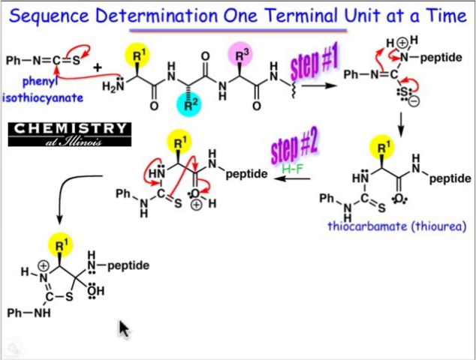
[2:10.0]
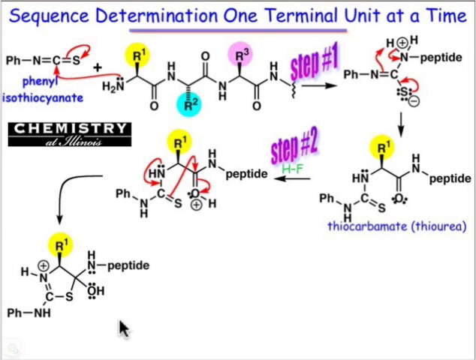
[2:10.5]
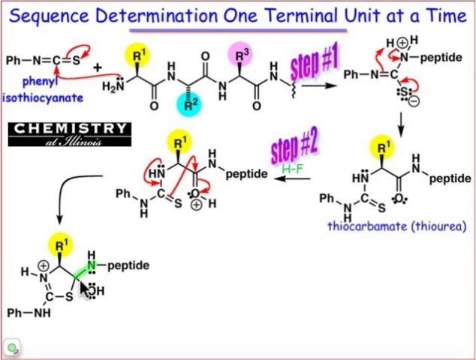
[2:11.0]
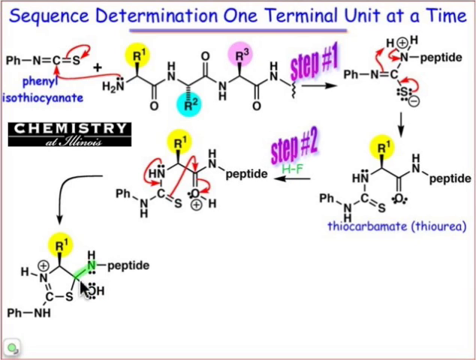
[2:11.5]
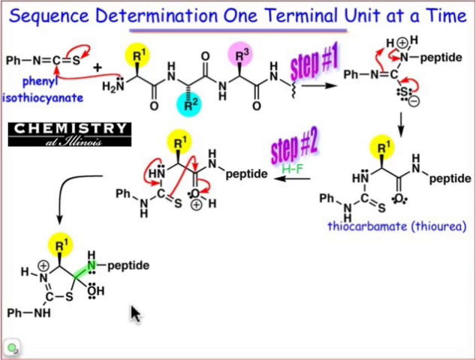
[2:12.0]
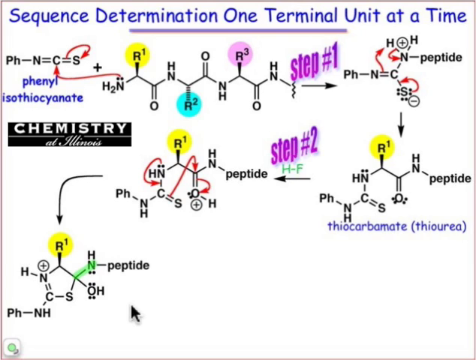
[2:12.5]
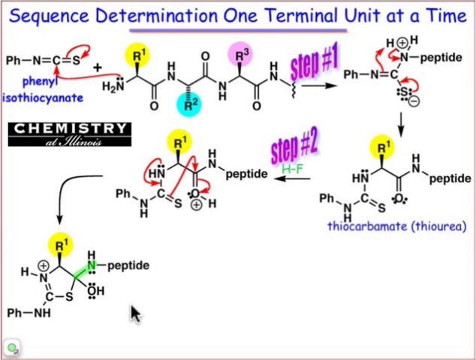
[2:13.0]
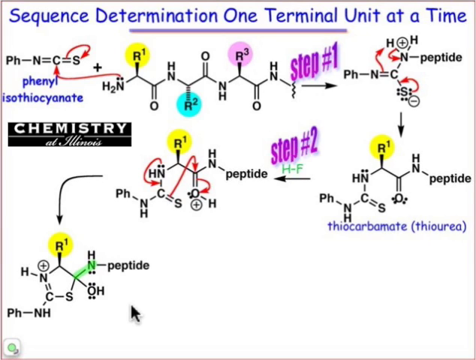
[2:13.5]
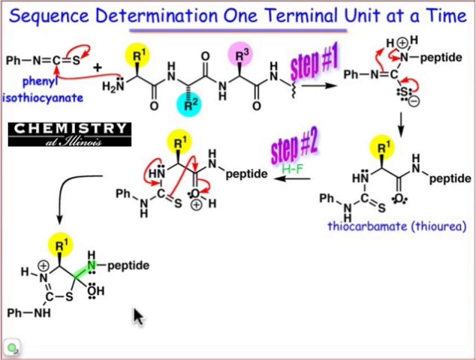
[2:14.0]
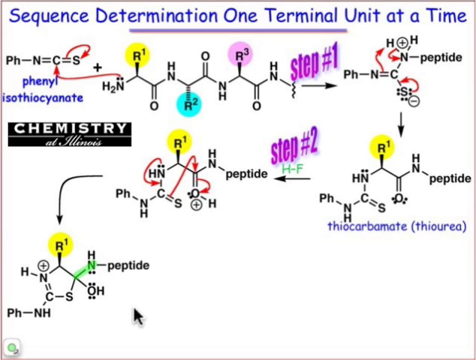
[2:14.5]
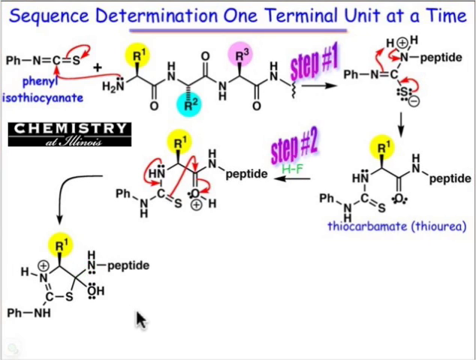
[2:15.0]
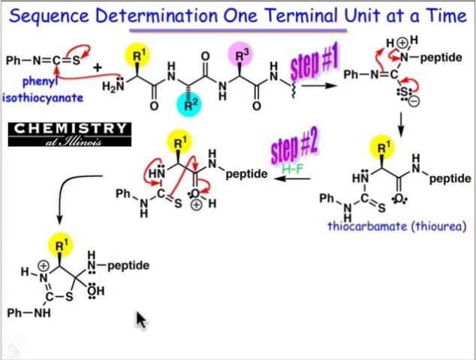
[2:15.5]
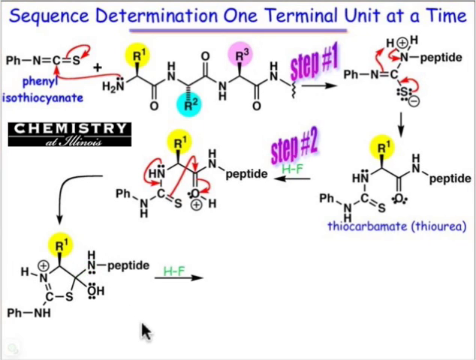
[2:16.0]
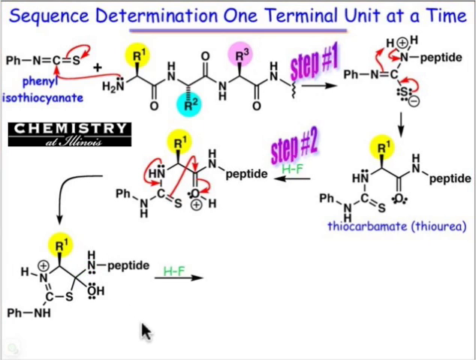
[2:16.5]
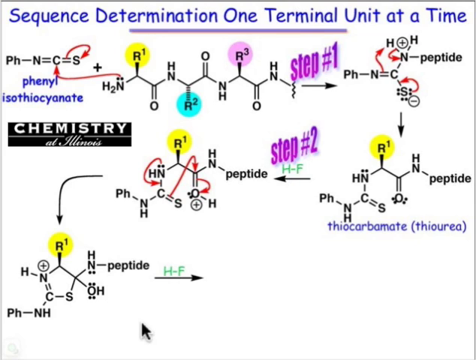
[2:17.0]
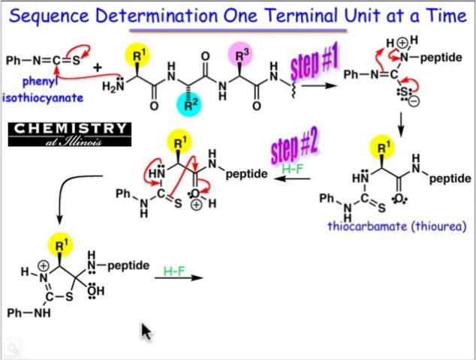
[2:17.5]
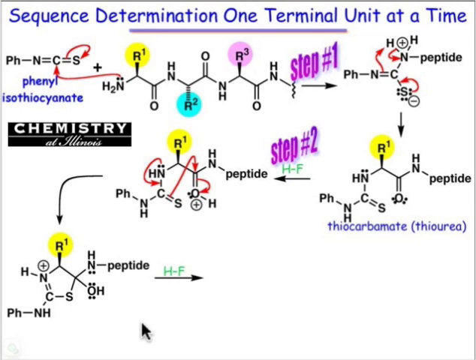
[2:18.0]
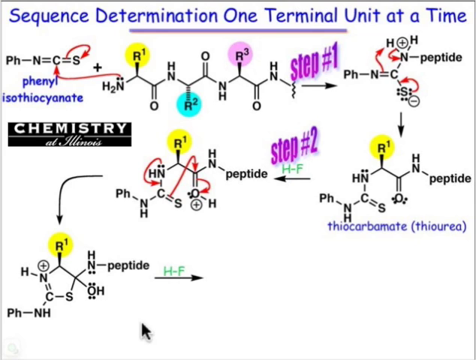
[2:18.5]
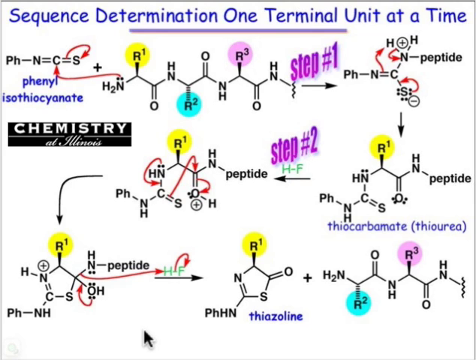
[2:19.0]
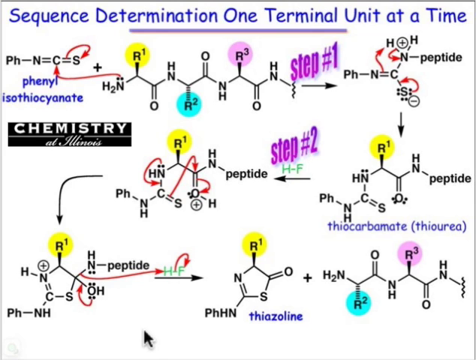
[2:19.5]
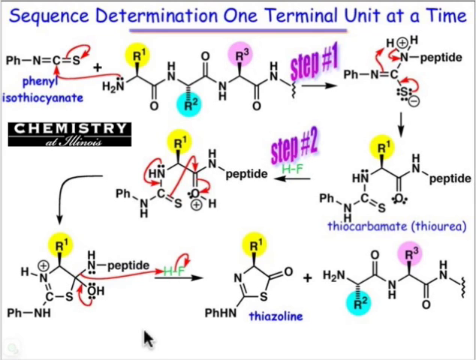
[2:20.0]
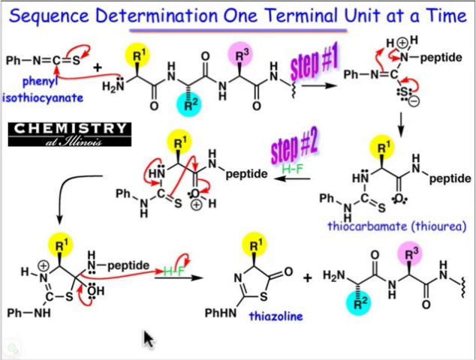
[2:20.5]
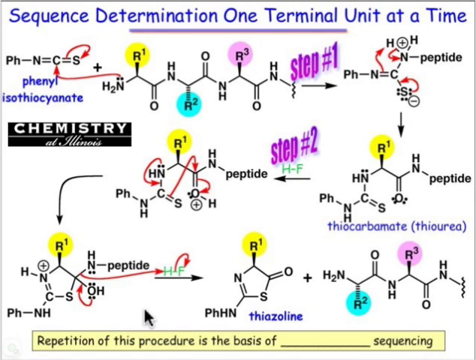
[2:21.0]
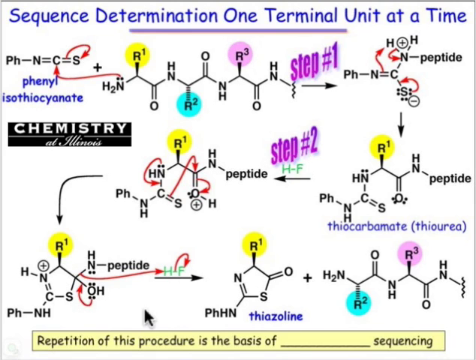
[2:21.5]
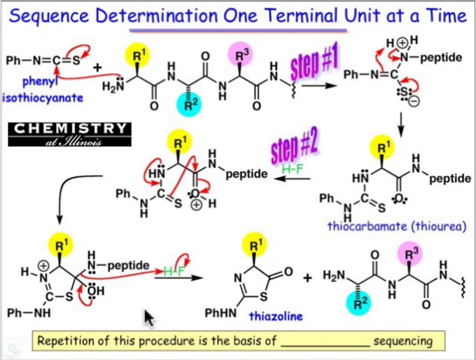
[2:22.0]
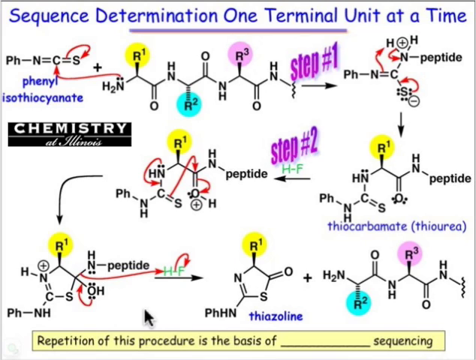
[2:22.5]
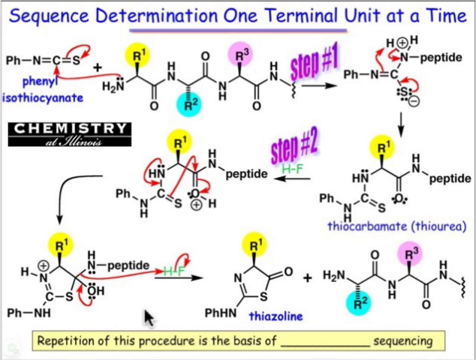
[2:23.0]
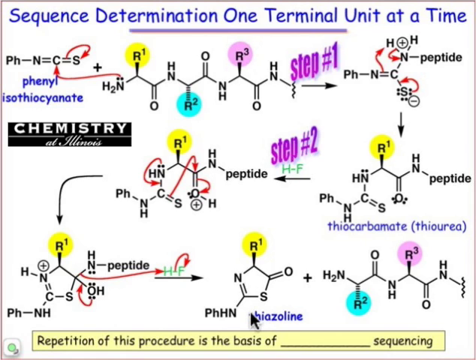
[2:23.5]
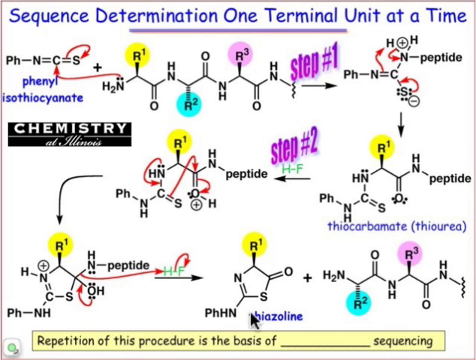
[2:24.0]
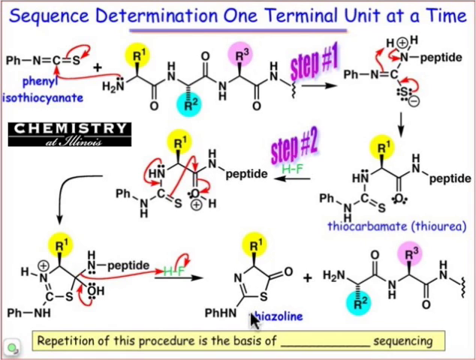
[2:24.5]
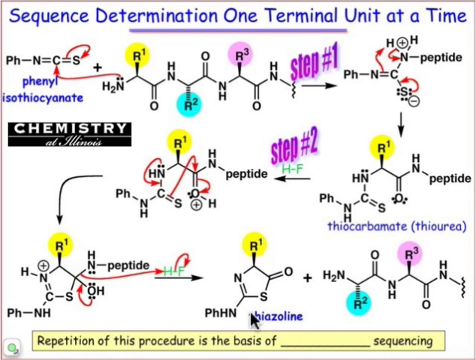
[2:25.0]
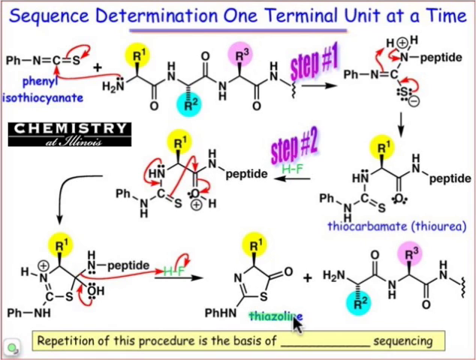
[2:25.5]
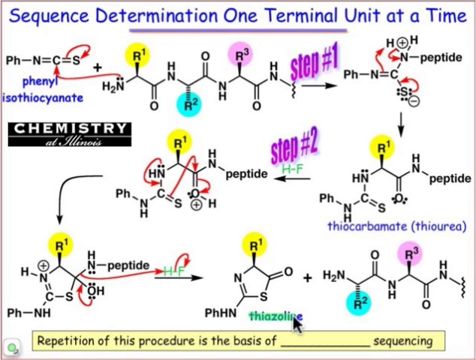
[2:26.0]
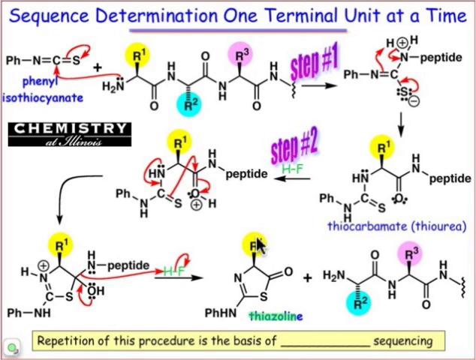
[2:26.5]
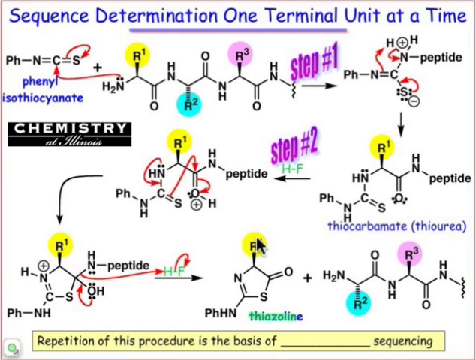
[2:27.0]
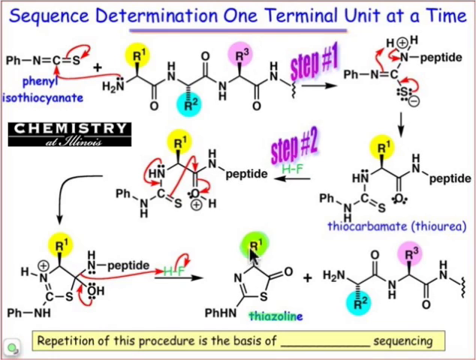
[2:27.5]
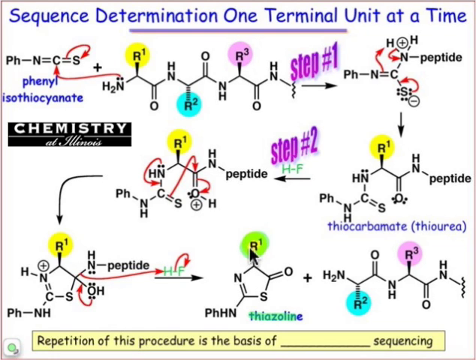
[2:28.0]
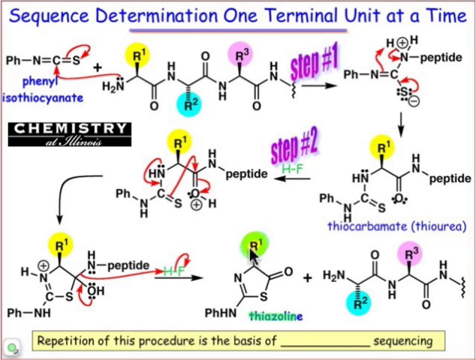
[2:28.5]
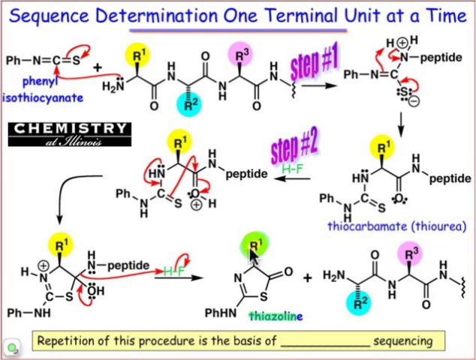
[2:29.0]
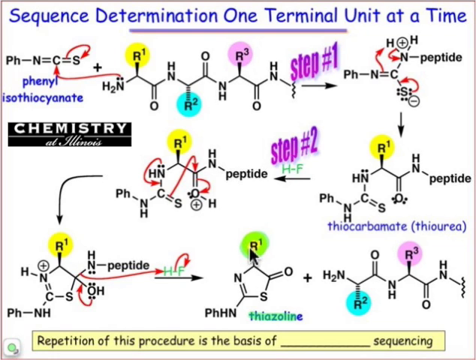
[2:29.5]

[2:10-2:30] A white background has blue text across the top that says "sequence determination one terminal unit at a time." Directly beneath that in the center is a purple line running from left to right. Beneath that, on the left side, is a formula for phenyl isothiocyanate. It begins with "pH-n=C=S," followed by plus, an H2N, then goes up to an R1 inside a yellow circle, down to an O, up to an HN, down to an R2 inside a blue circle, up to an O, down to an H, up to R3 inside a pink circle, down to O, up to HN, and down to a squiggle. Directly above that is purple text that says "step number one," followed by a directional arrow pointing to the right and a formula that states "pH-n=C," going up to N, which splits off to H plus H minus peptide. Beneath that to the left, "chemistry at Illinois" is inside a black rectangle. More formulas are shown, for thiocarbamate and thiourea. The first cluster goes from pH down to NH, up to C, up to HN, up to R1 inside a yellow circle, down to O, up to HN, minus the peptide. A directional arrow points to the left; directly above it is green text that says "H minus F," and directly above that is purple text that says "step number two."